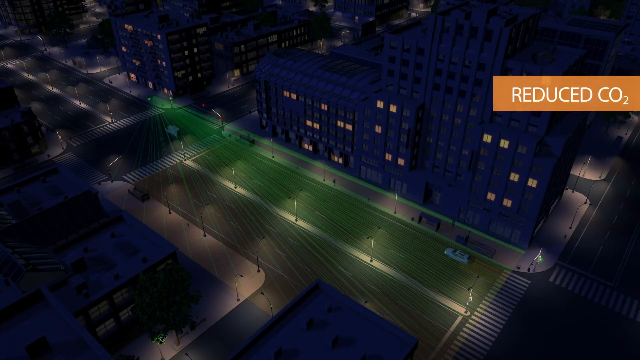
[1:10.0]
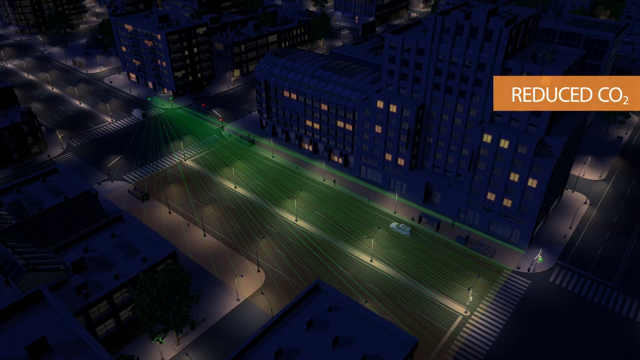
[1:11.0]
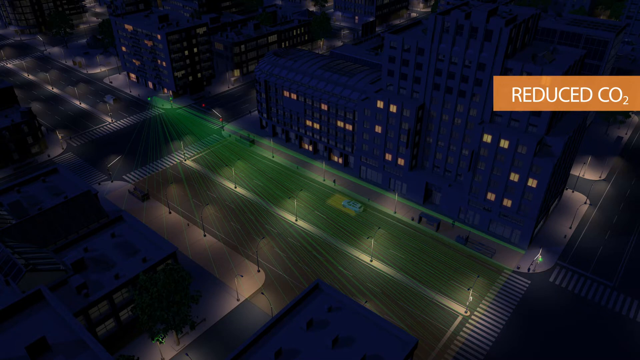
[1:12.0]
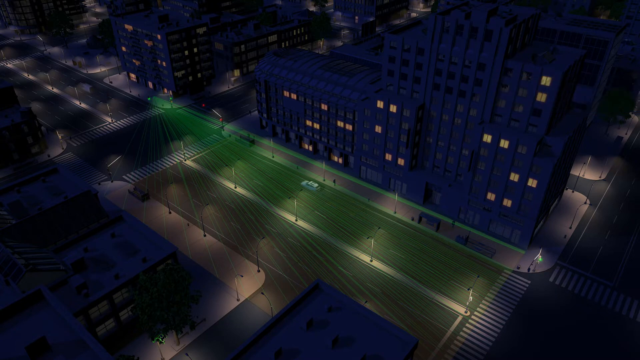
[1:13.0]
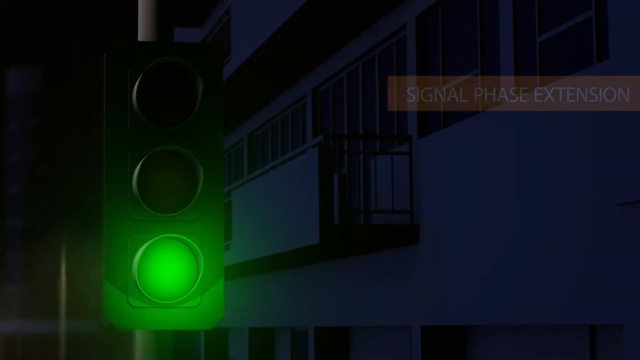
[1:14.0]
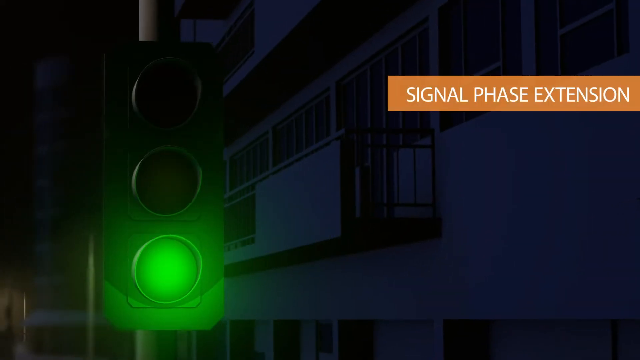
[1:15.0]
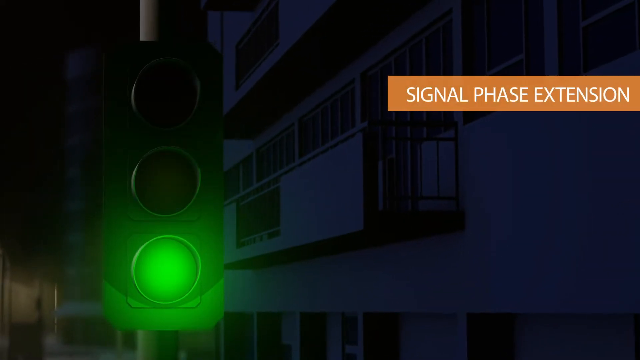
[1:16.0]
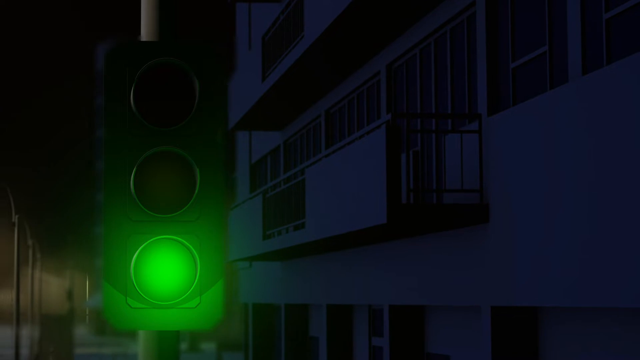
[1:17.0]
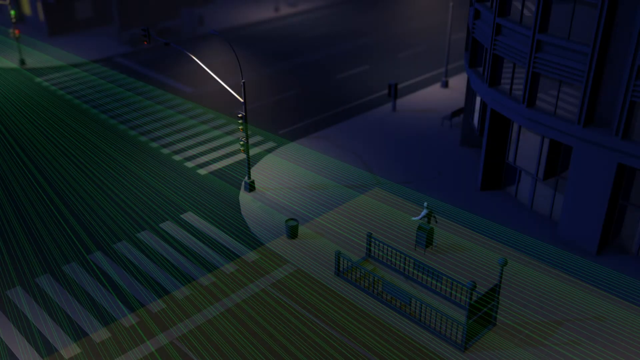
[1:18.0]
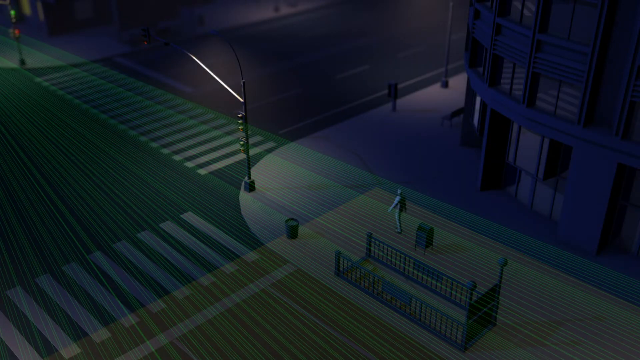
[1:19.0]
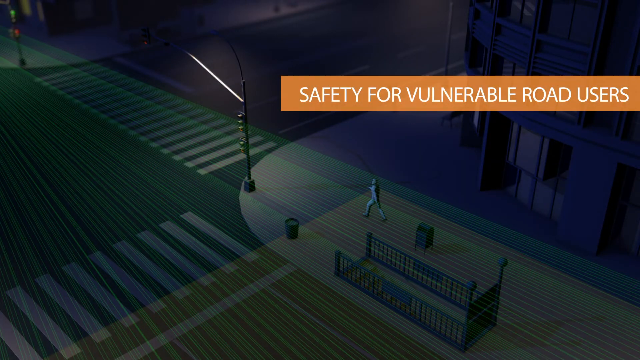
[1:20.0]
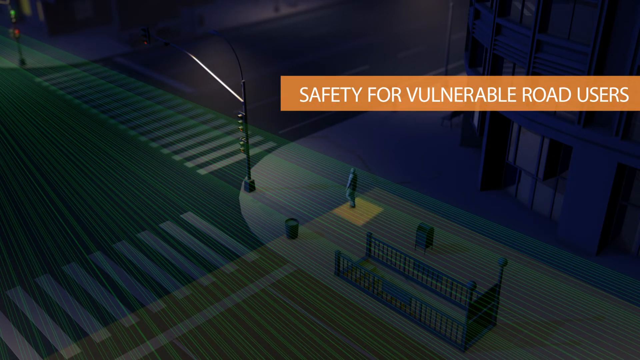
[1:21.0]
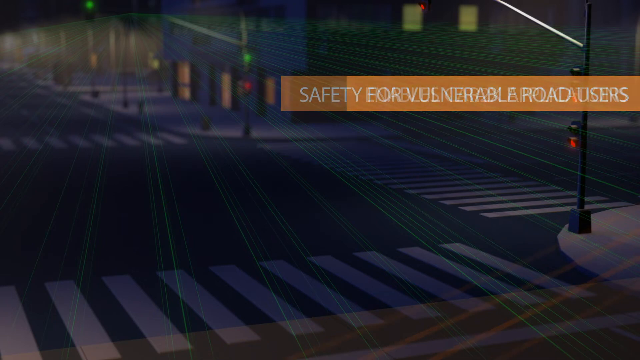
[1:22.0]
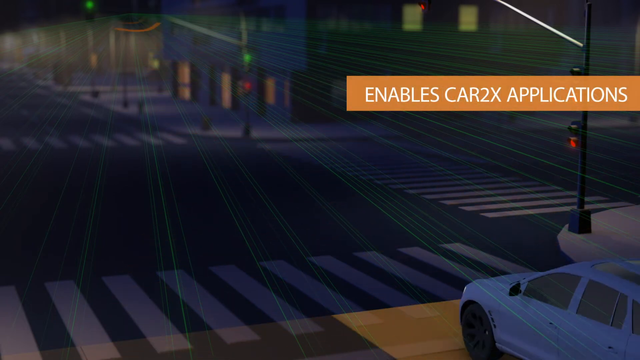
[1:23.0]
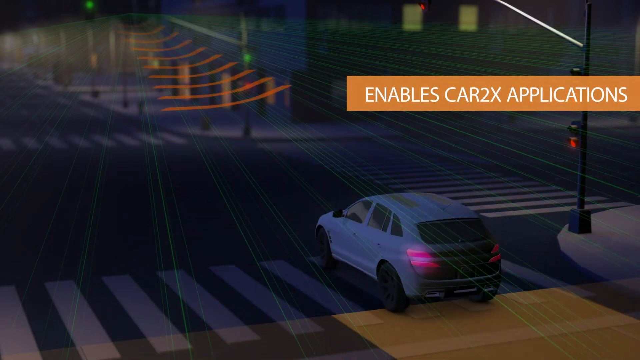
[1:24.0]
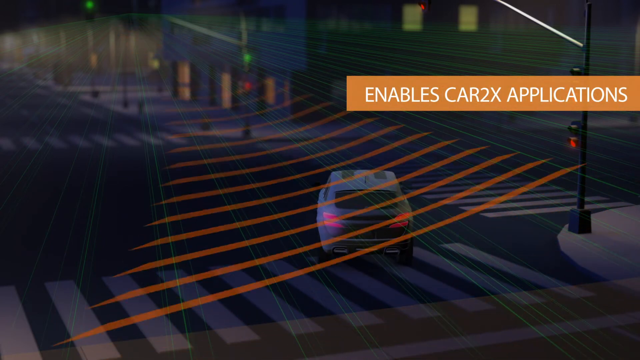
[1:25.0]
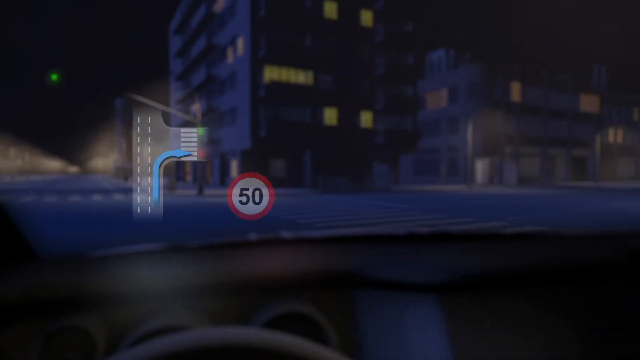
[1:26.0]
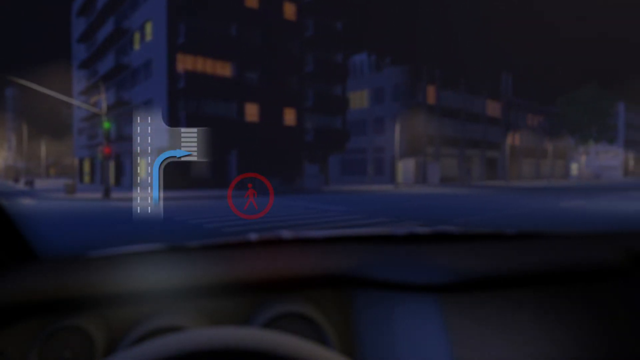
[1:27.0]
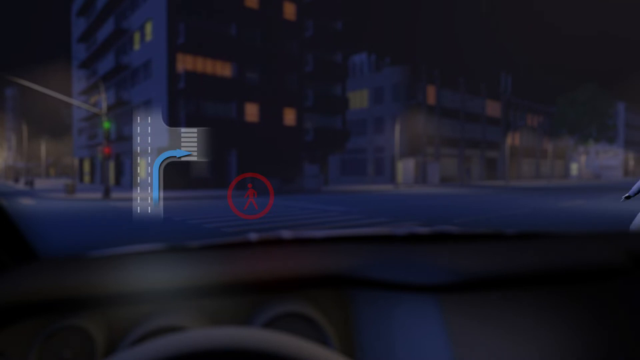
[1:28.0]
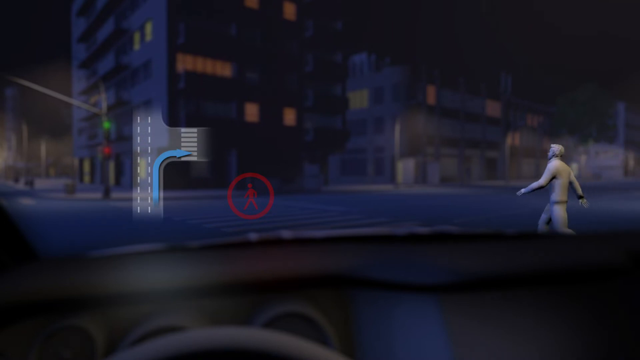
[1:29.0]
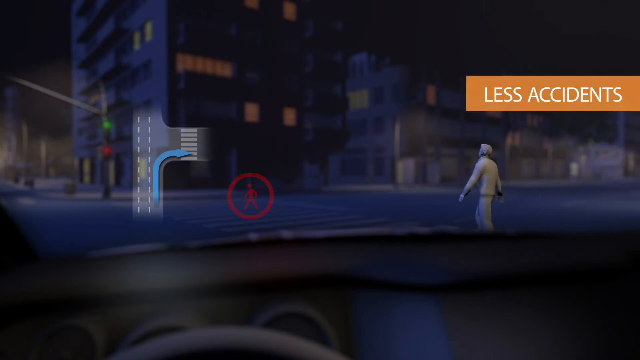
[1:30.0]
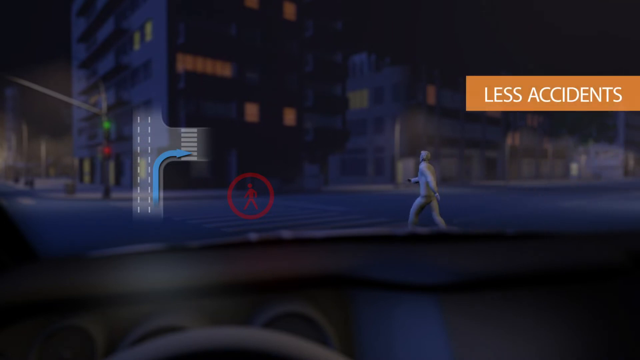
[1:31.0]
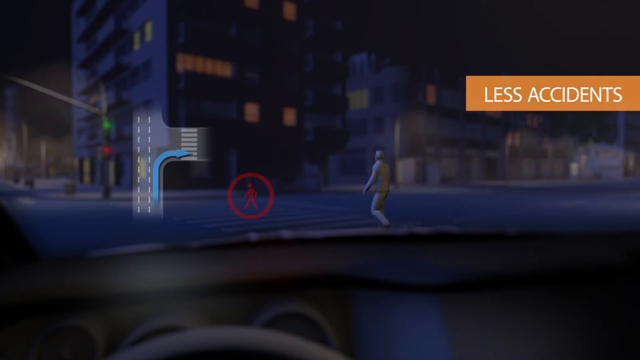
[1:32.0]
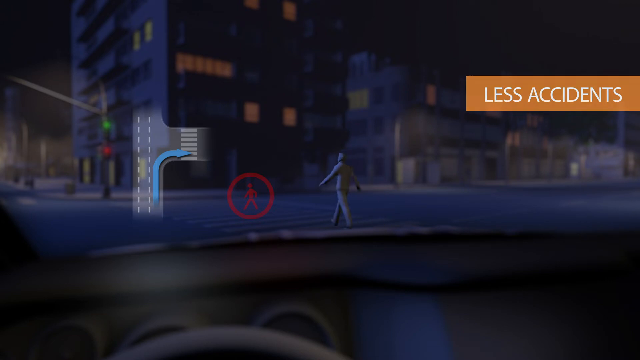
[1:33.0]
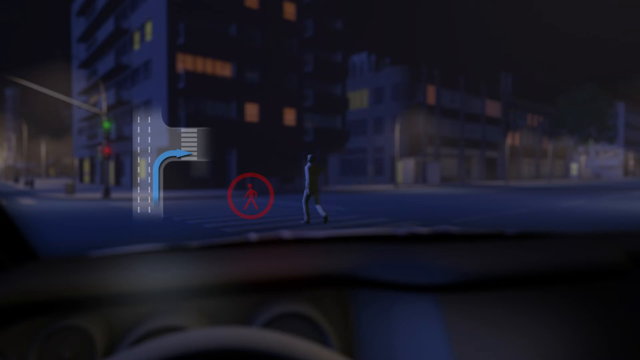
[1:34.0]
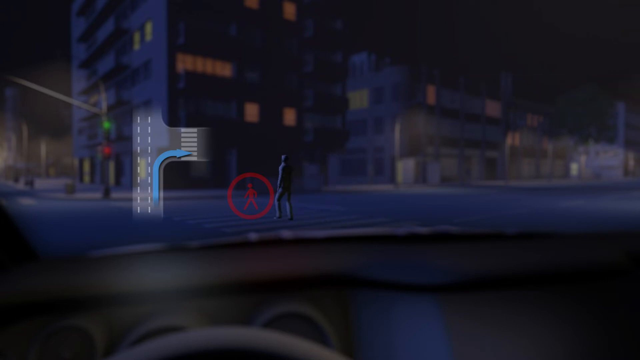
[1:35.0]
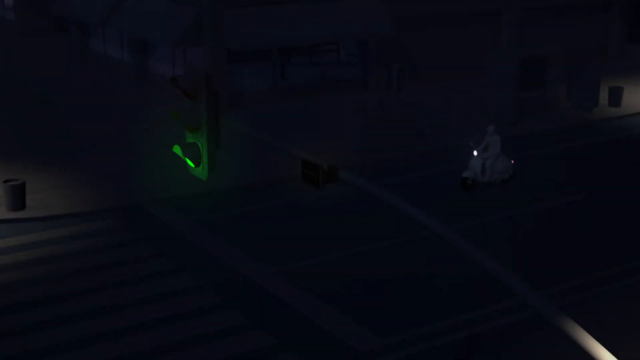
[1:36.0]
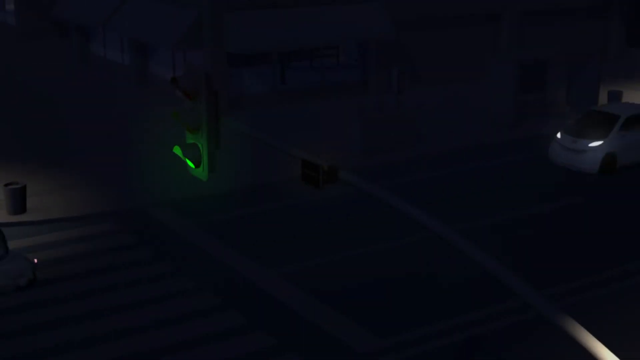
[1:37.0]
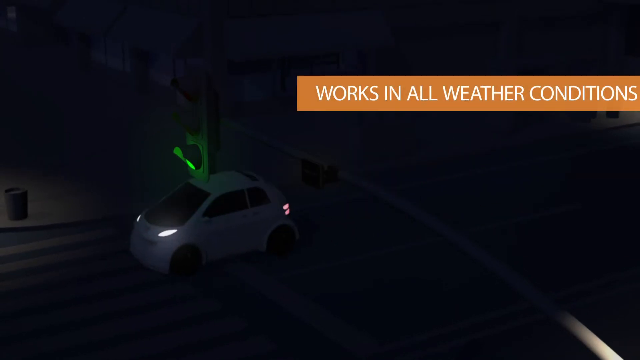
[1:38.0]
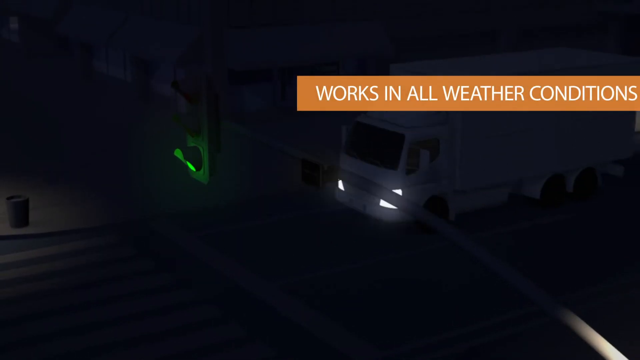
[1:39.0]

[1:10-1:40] It is still nighttime, and the sensor's range is displayed. Text reads "signal phase extension." A person walks at night and the sensor picks them up, with the phrases "Safety for vulnerable road users" and "Enables car 2x applications." The walking person remains on screen, and text mentions fewer accidents and that the sensor works in all weather conditions. The graphics show what seem to be waves sent out and bouncing back.